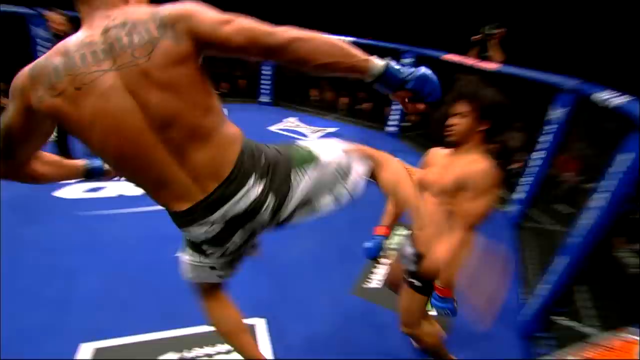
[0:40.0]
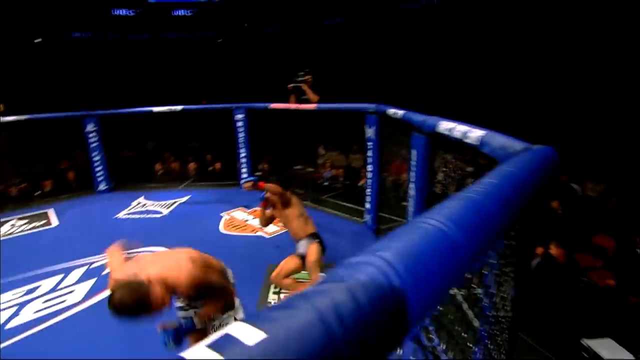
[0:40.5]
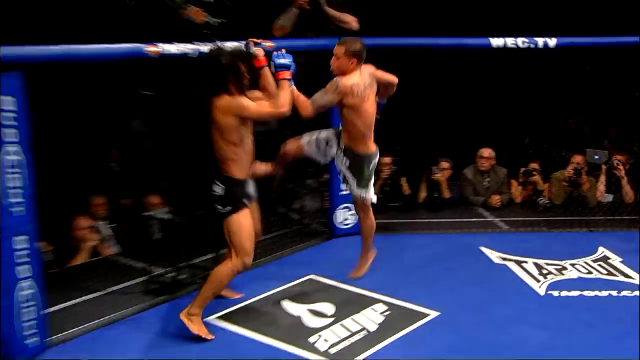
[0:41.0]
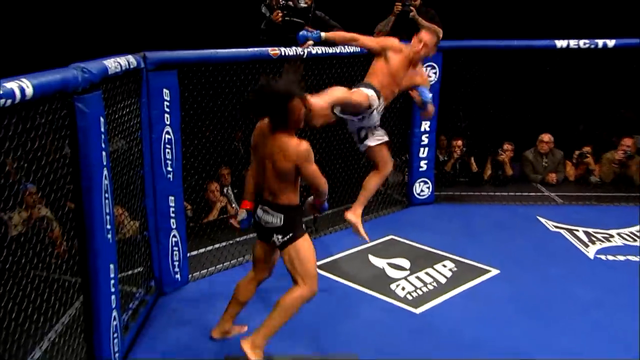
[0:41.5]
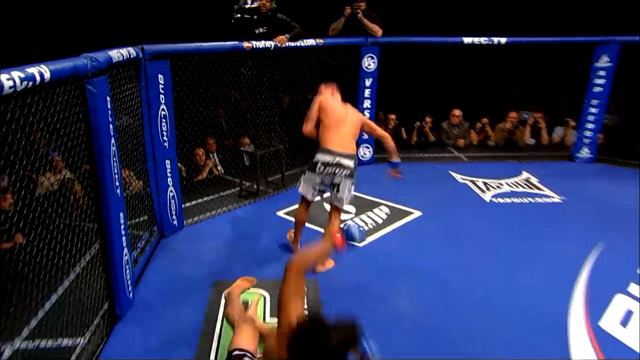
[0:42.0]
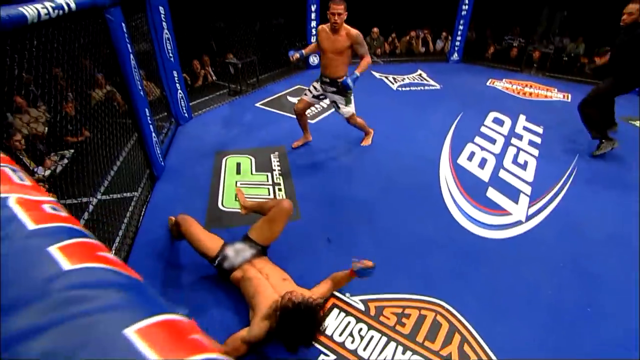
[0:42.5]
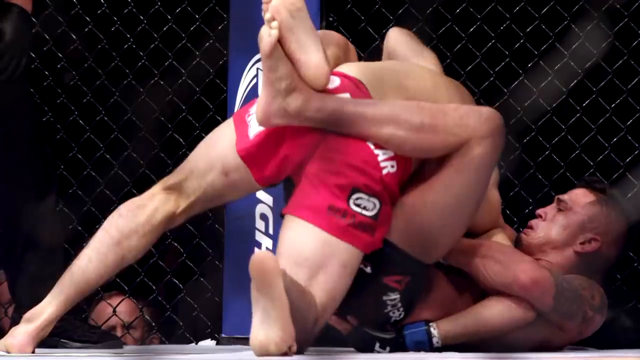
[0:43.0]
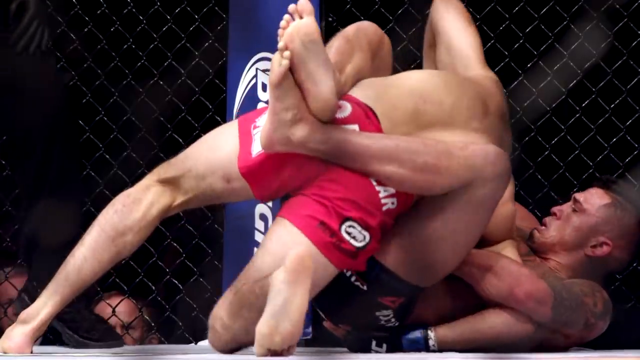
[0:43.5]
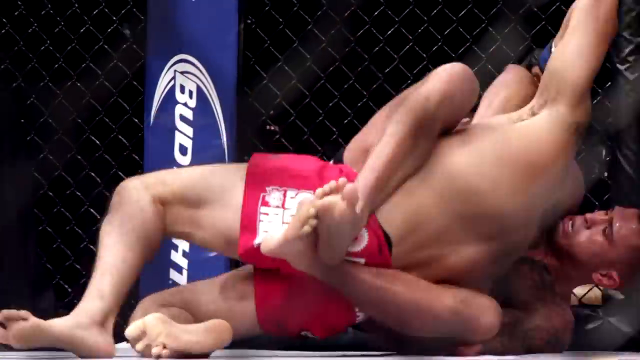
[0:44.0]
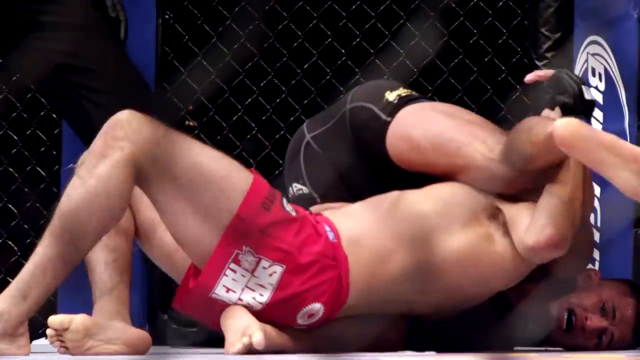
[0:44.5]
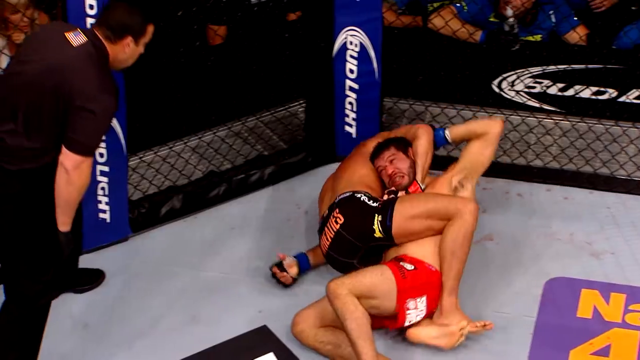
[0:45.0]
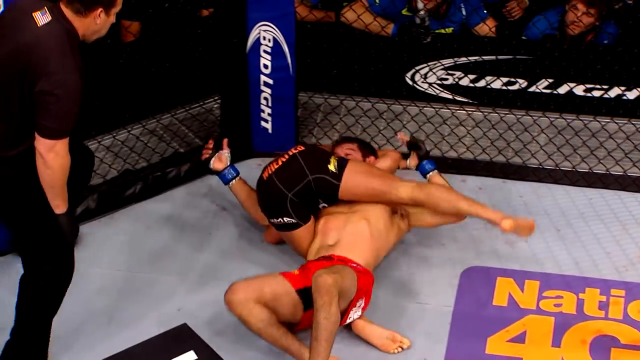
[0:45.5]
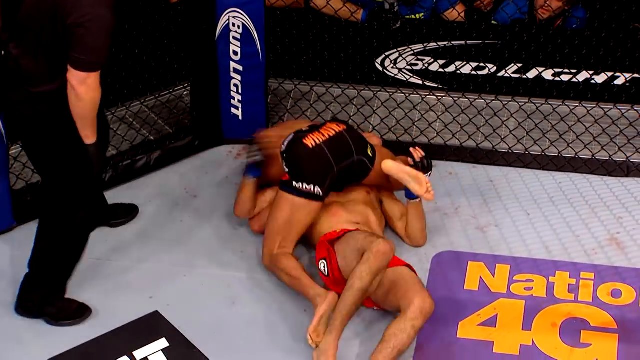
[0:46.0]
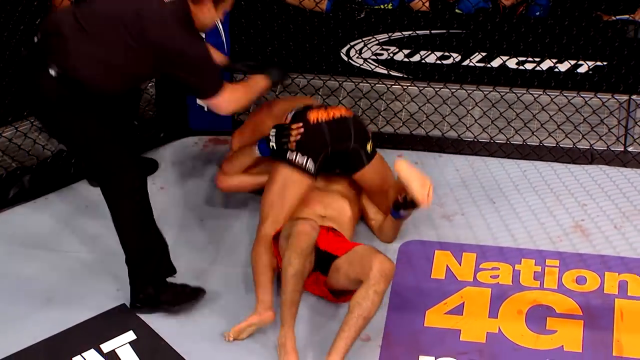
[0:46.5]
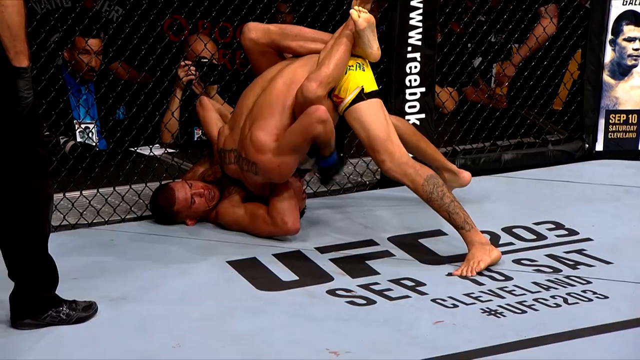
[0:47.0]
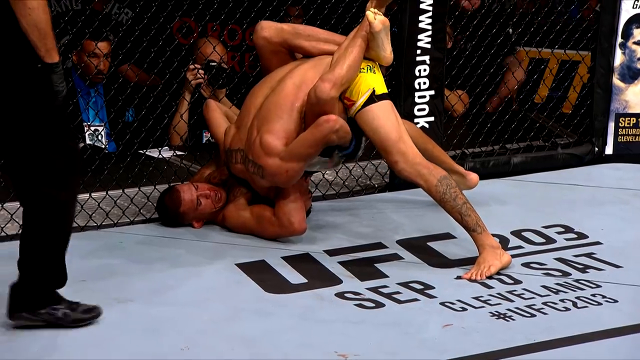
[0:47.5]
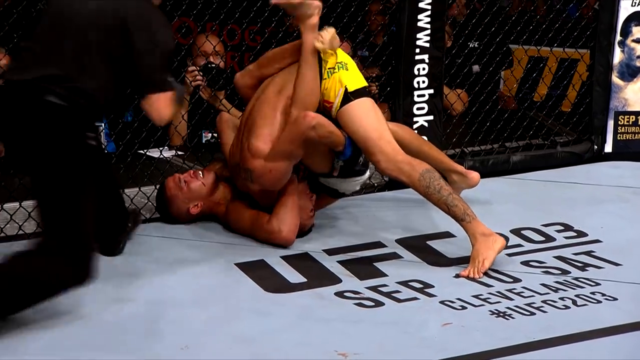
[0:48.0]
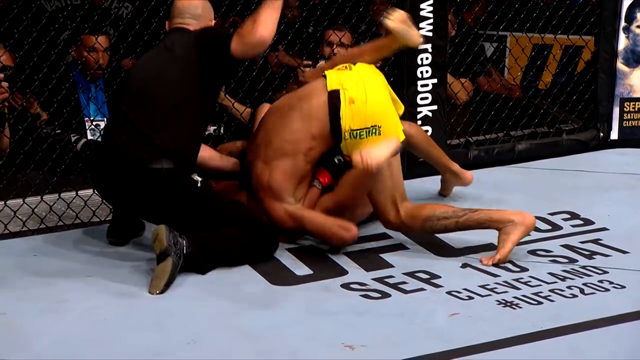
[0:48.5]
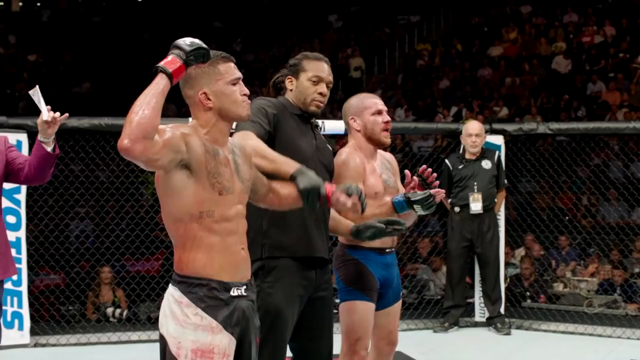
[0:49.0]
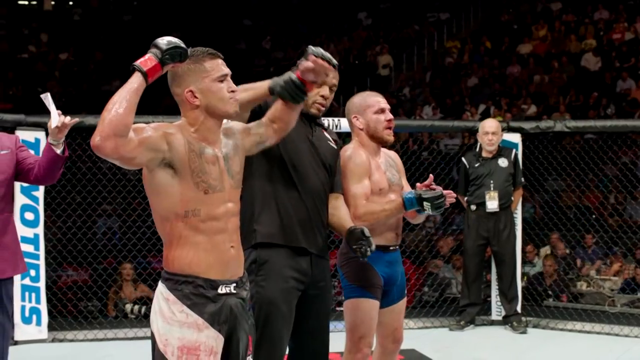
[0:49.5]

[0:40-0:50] The Arab UFC fighter bounces off a wall in the ring and kicks a man in the head, then another clip shows him kicking someone else in the head. Shirtless in red shorts, he wrestles a man on the ground in the ring while a referee punches the ground next to them. He then stands in the center of the ring as the referee holds his arm up. He looks maybe 25 to 30, with kind of a medium build: fit rather than very muscular, with visible muscles and a six-pack. Different clips show him wrestling, punching and kicking opponents and bouncing off the side of the ring, usually in a blue ring covered with Budweiser advertisements.